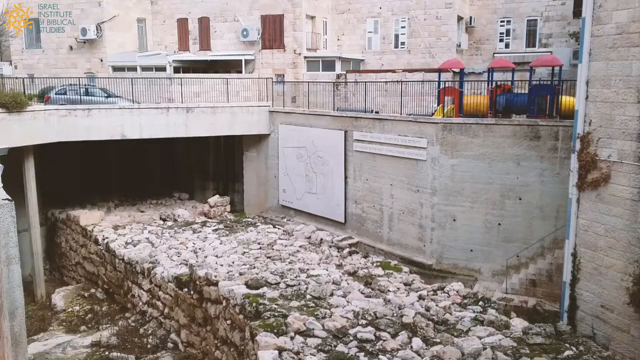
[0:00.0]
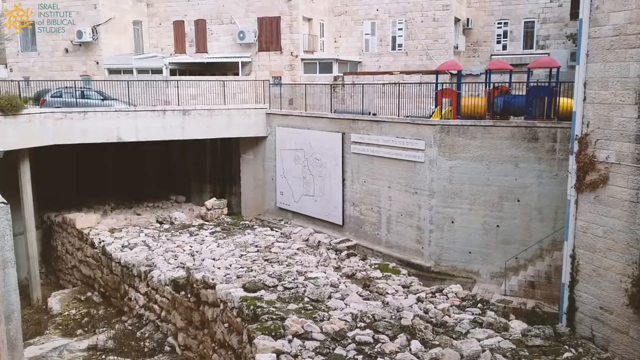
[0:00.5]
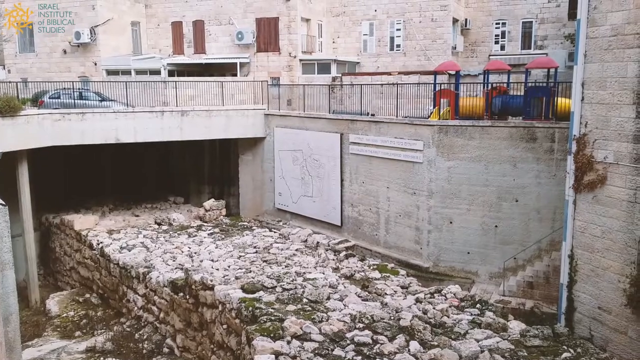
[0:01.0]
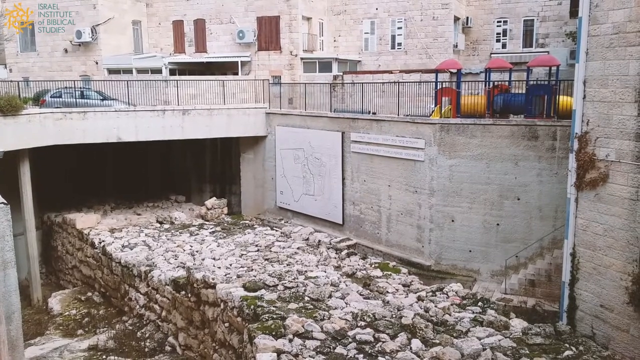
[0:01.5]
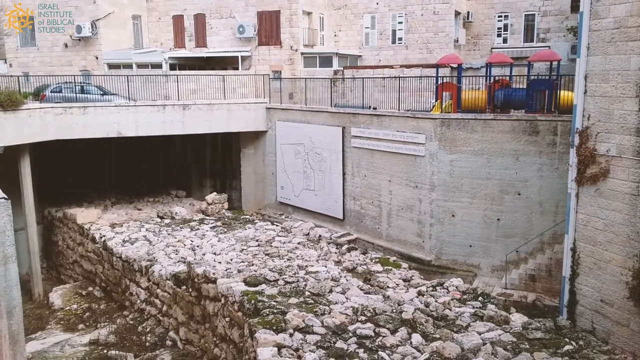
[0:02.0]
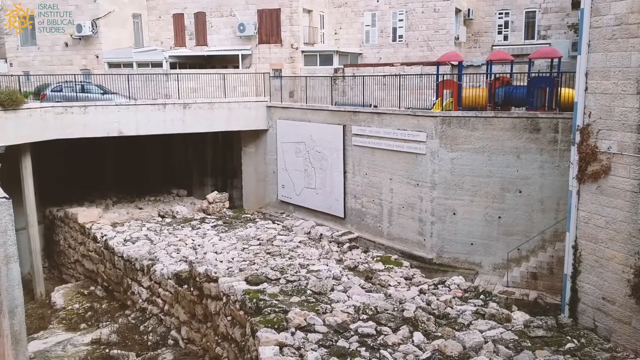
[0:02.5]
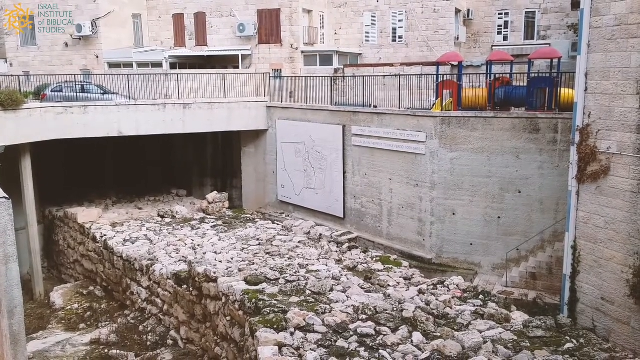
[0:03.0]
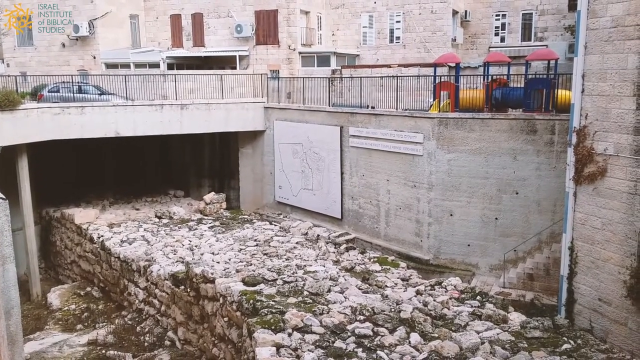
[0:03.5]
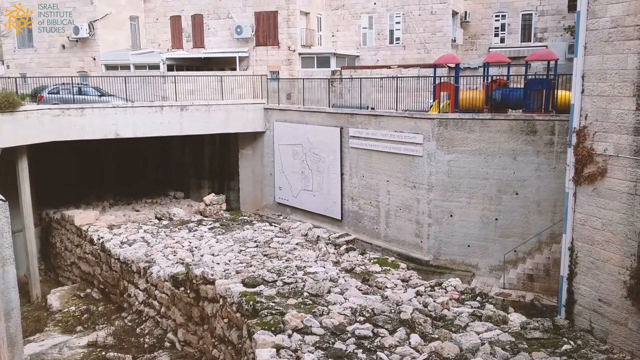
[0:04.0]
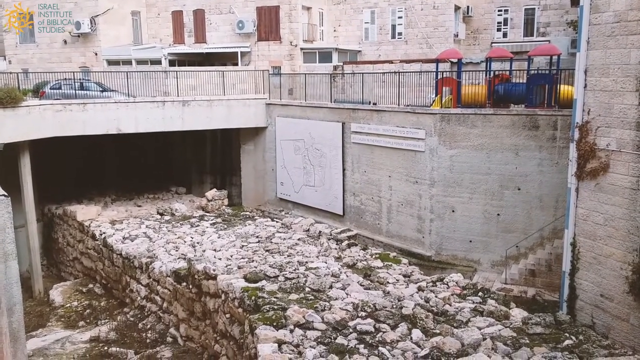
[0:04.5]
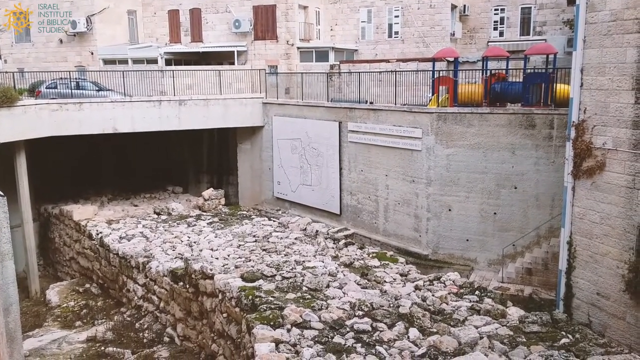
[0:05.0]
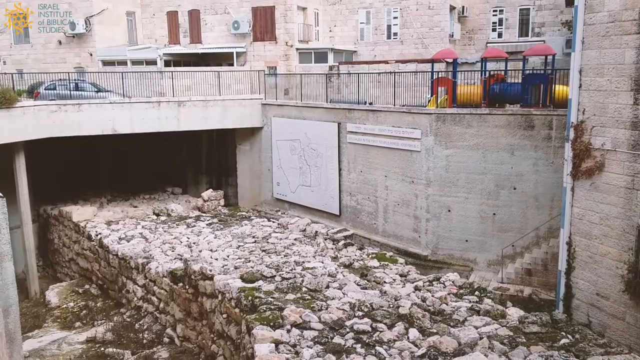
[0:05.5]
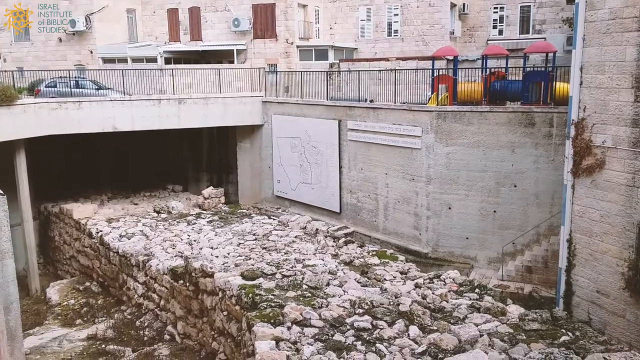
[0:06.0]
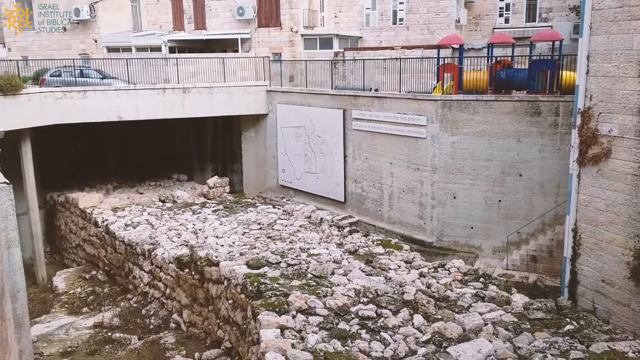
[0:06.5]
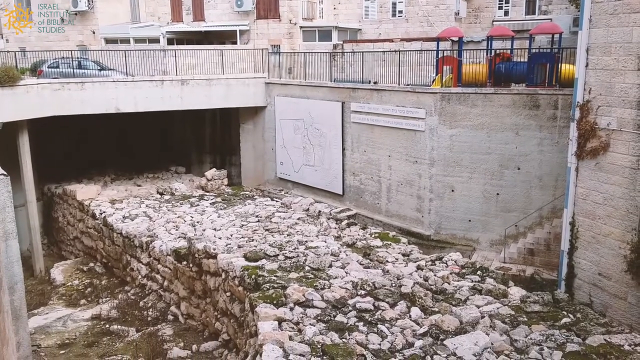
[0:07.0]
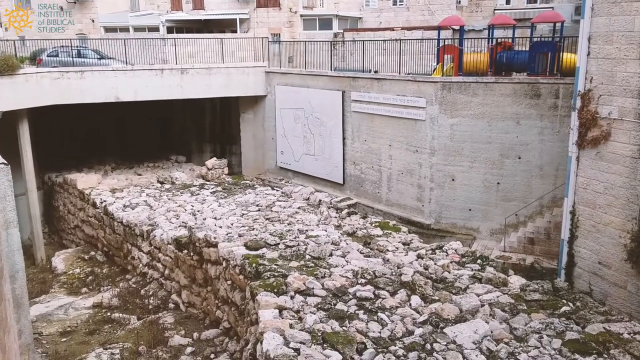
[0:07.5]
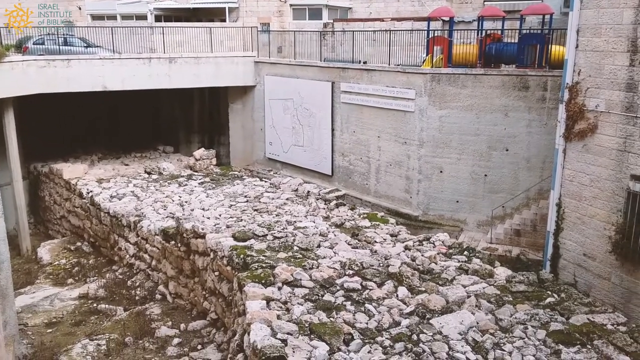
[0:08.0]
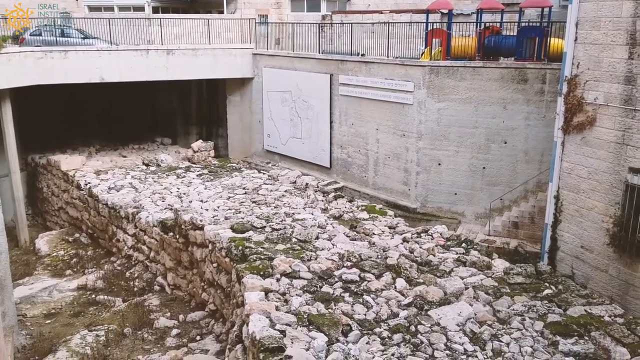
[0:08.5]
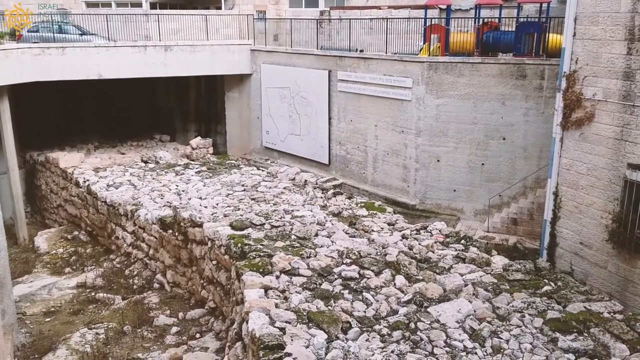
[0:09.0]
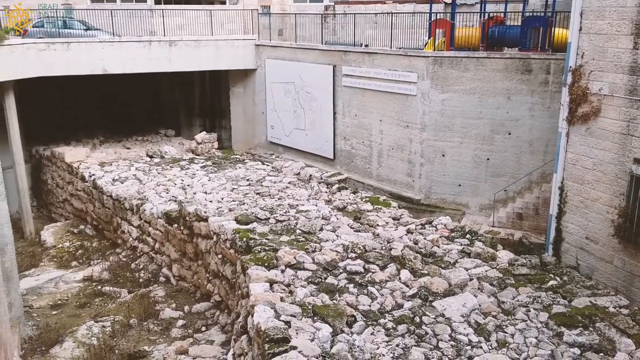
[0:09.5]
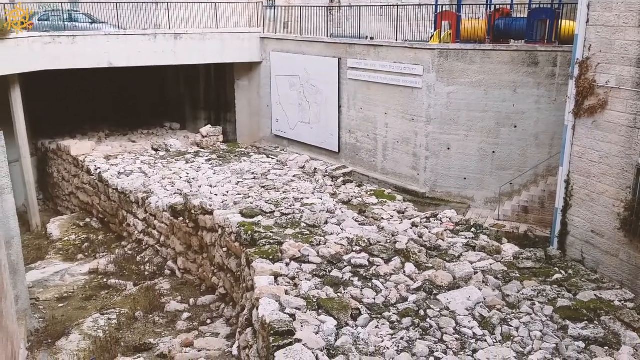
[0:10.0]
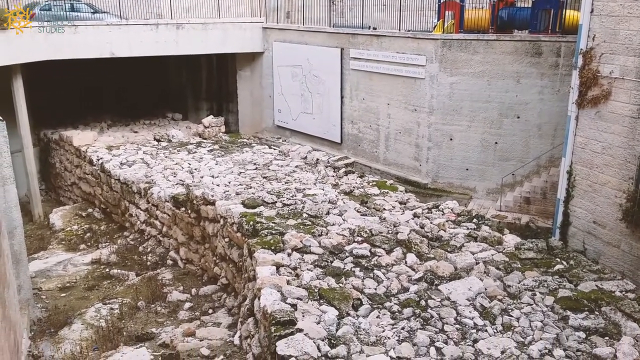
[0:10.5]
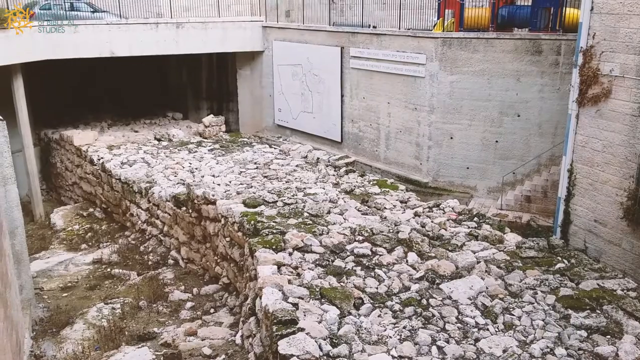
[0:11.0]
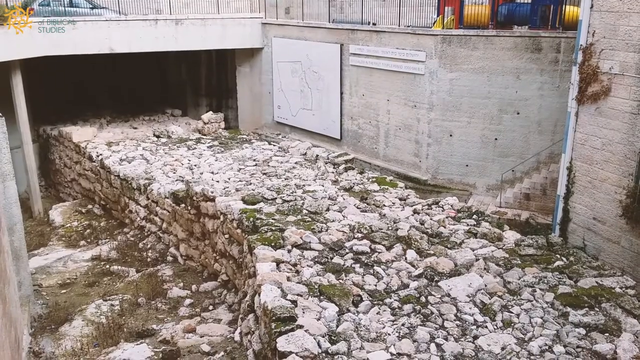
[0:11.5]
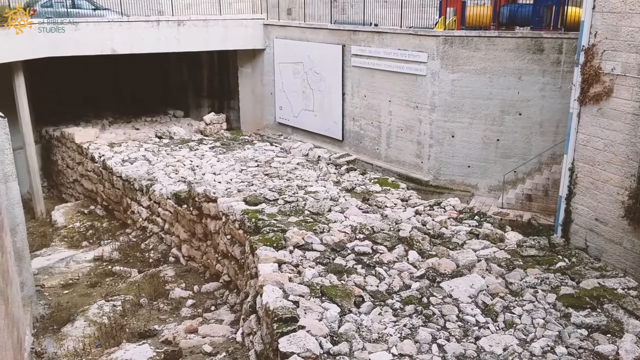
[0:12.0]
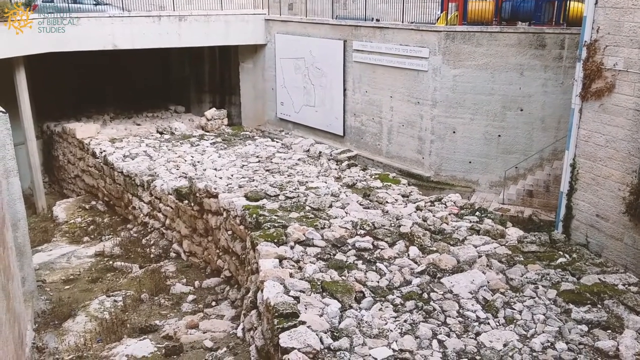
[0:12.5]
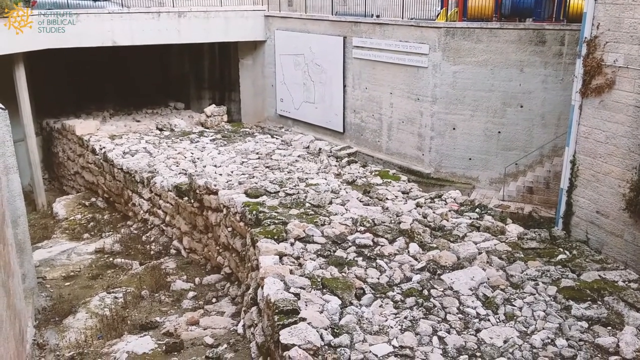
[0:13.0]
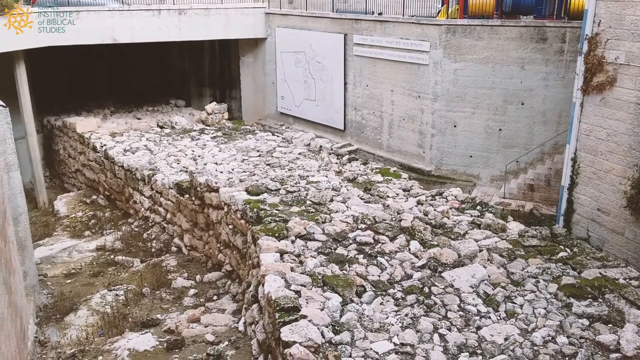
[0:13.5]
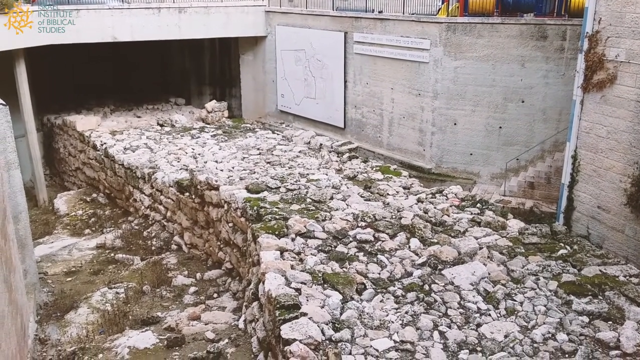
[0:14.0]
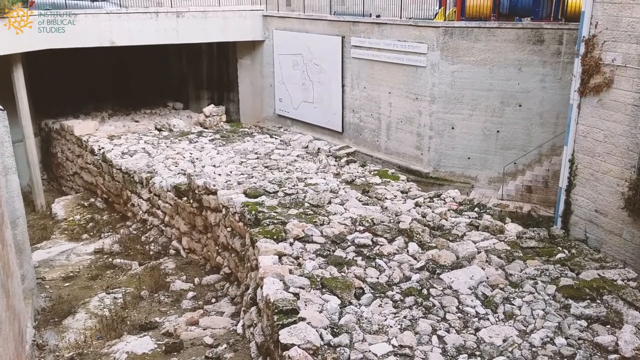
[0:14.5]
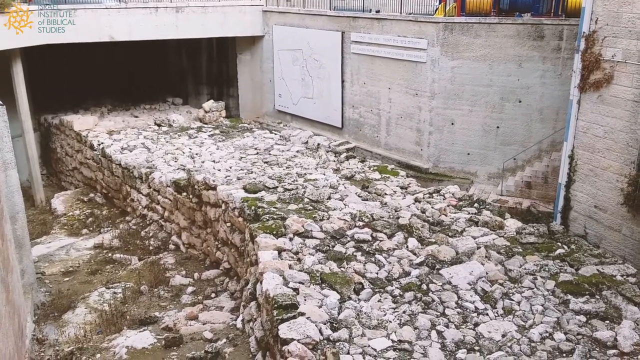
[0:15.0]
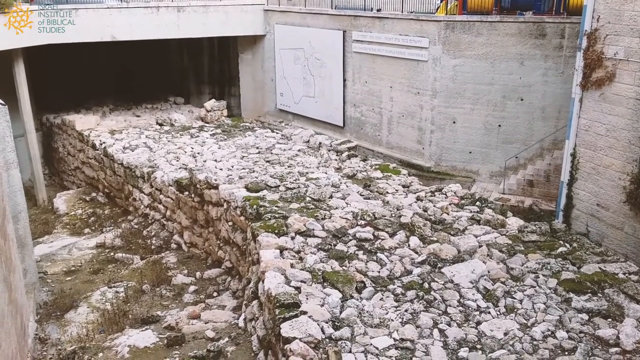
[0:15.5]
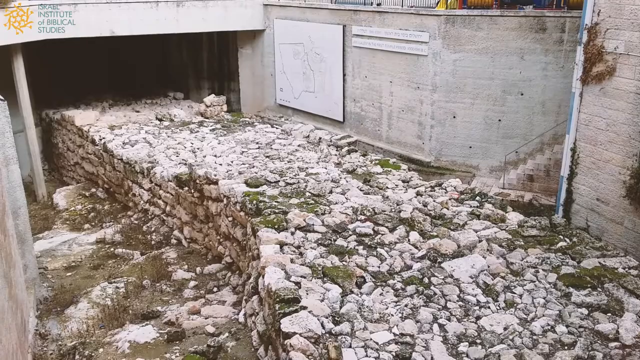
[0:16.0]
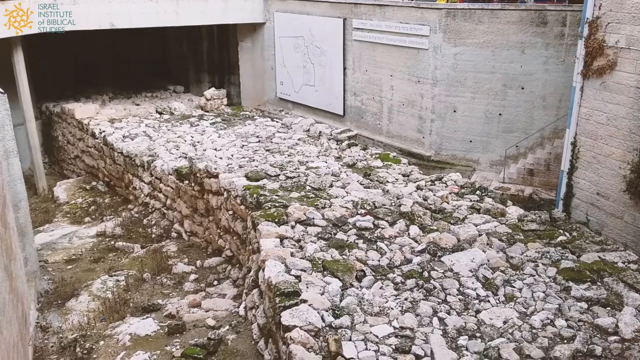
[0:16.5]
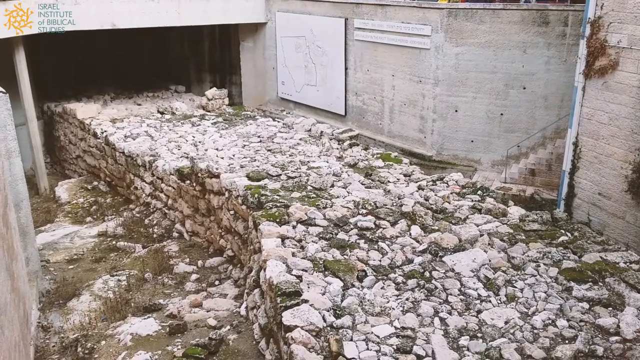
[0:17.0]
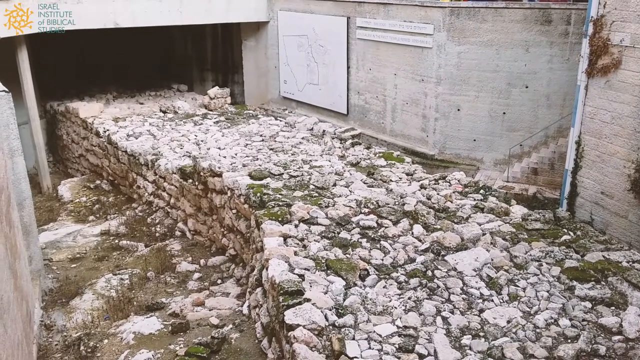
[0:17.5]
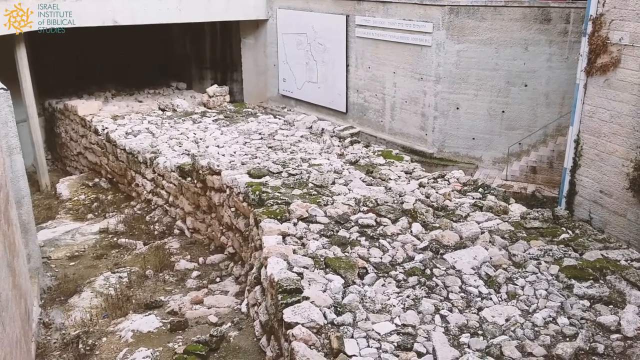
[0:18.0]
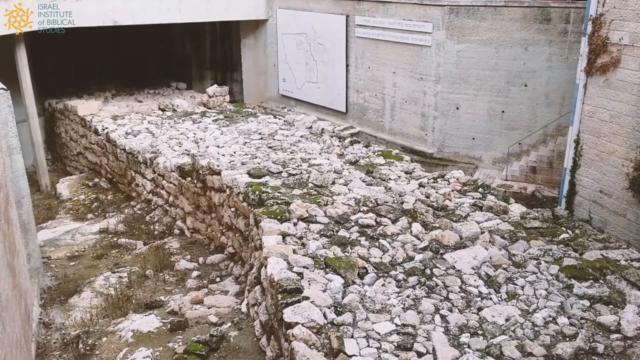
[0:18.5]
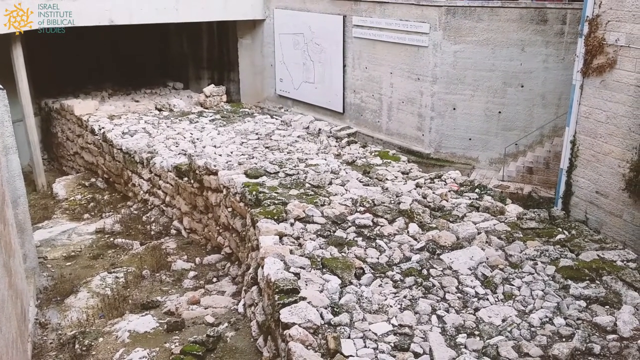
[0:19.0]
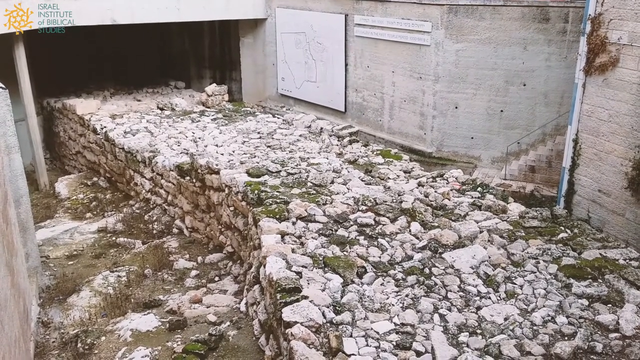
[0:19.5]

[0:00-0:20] A messy part of a city is shown, with a lot of stone at the bottom of an underpass. The stone apparently is not something that was dumped there; it looks like it has been there for many decades and has become part of the ground. People are looking at the stone at the bottom of the underpass and at the bottom of a staircase. The area appears to be outside a building of some sort, maybe an apartment building, possibly an office building. It is kind of a raised lawn area, but there is not much lawn because it is covered in stones.